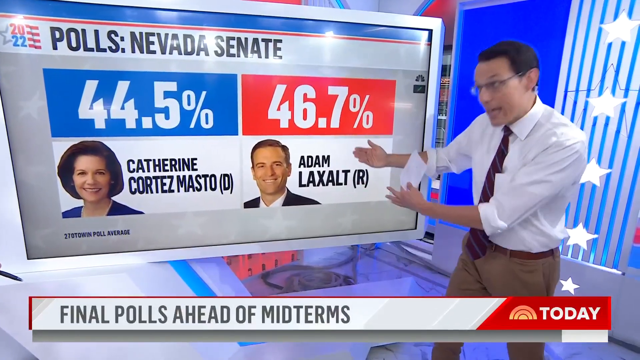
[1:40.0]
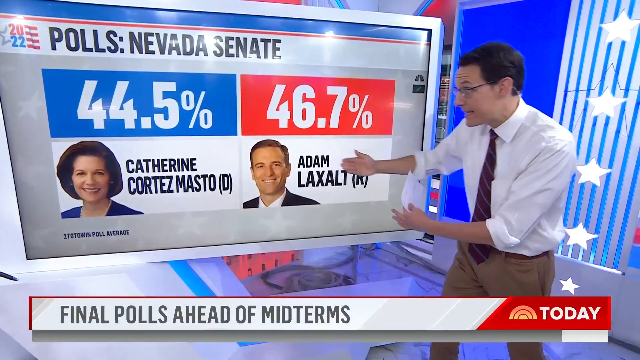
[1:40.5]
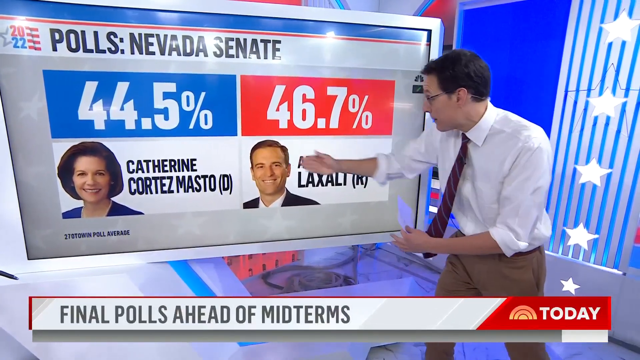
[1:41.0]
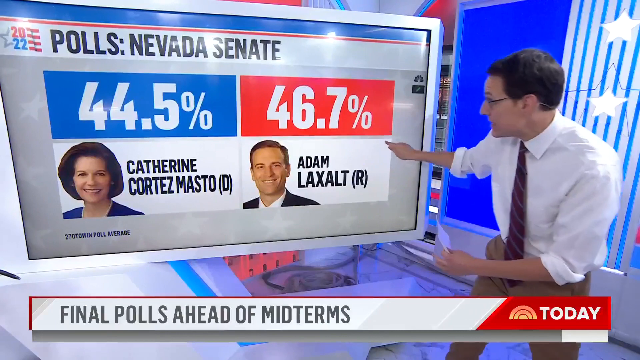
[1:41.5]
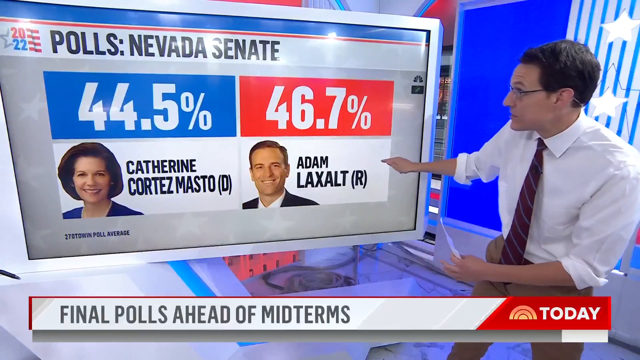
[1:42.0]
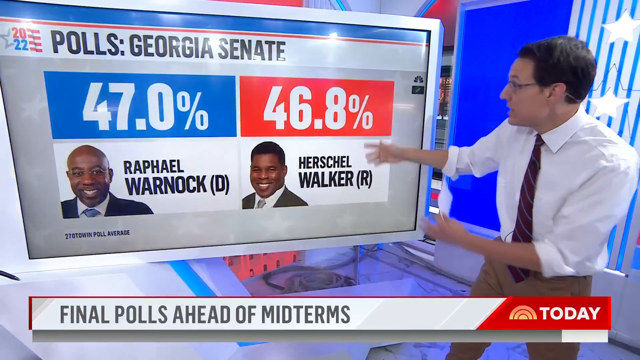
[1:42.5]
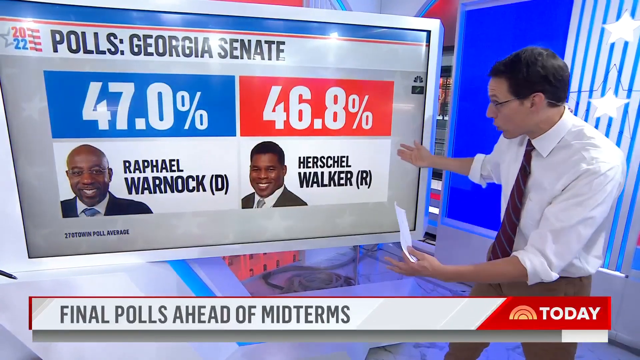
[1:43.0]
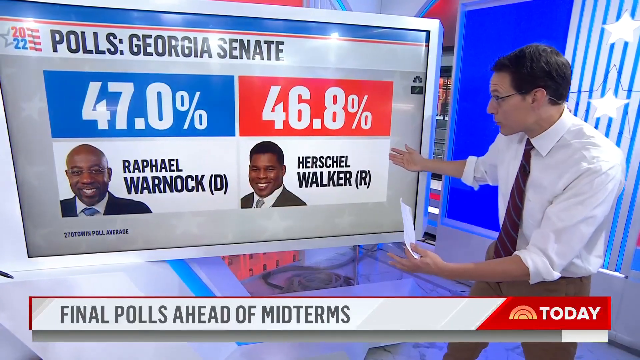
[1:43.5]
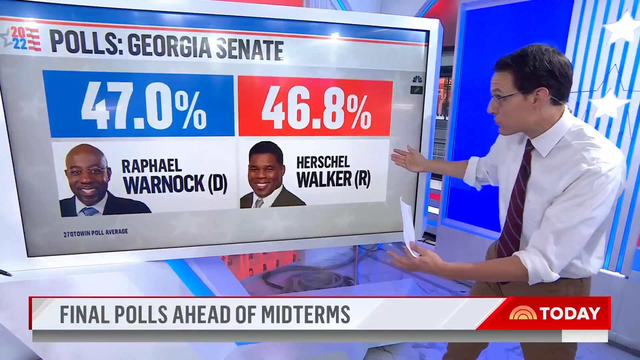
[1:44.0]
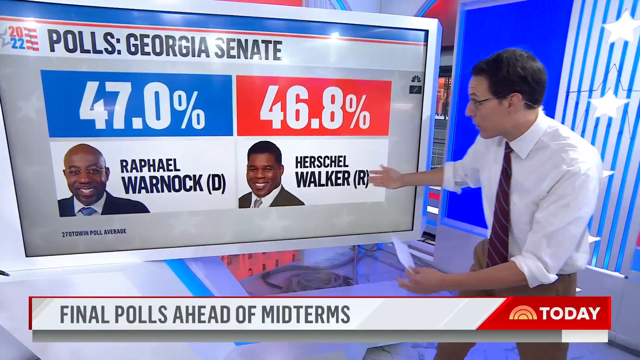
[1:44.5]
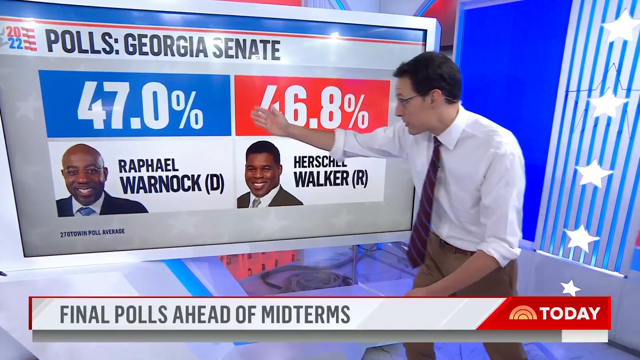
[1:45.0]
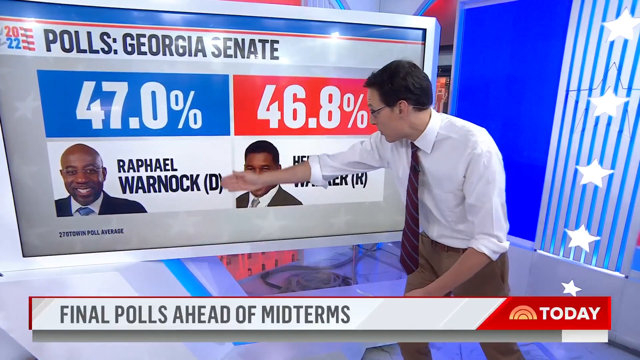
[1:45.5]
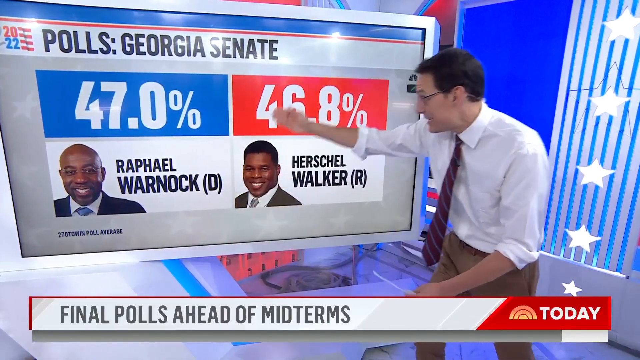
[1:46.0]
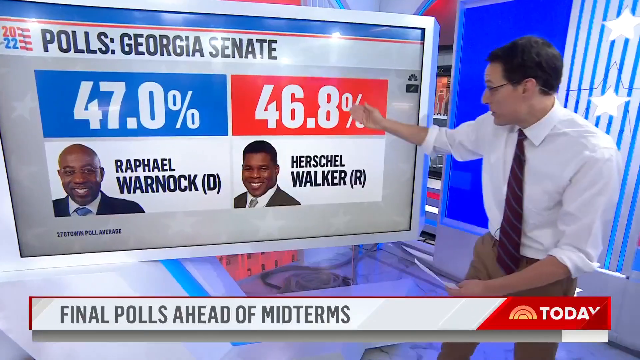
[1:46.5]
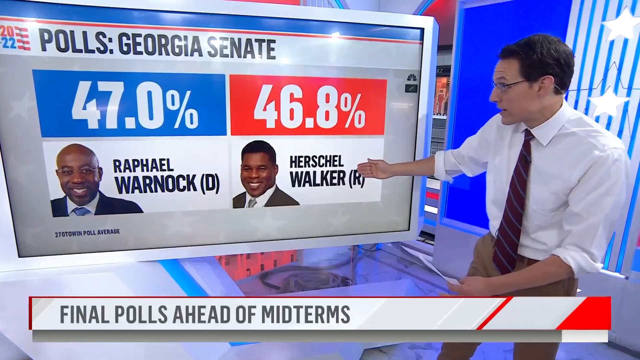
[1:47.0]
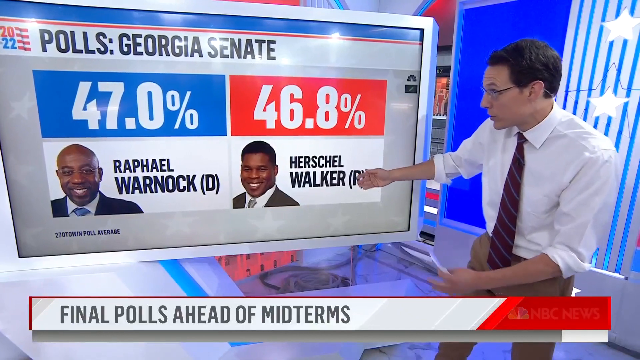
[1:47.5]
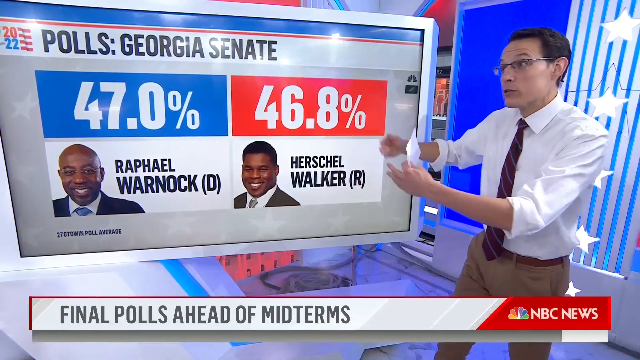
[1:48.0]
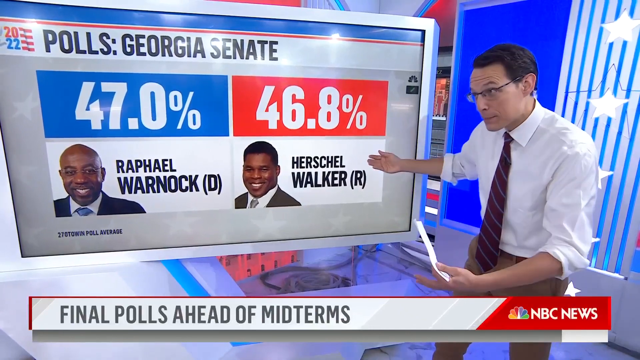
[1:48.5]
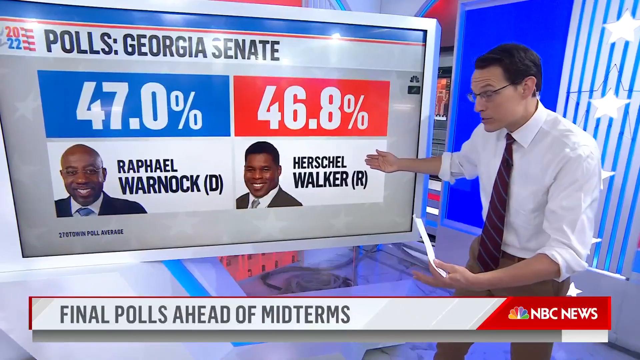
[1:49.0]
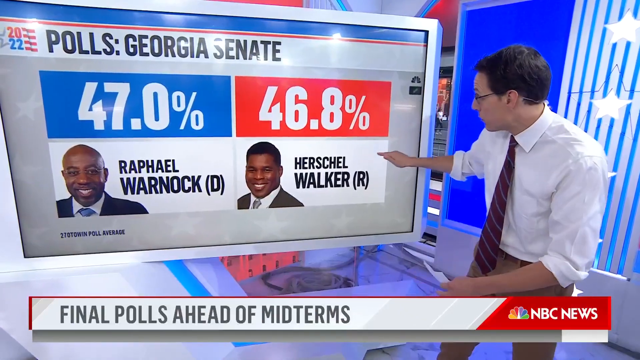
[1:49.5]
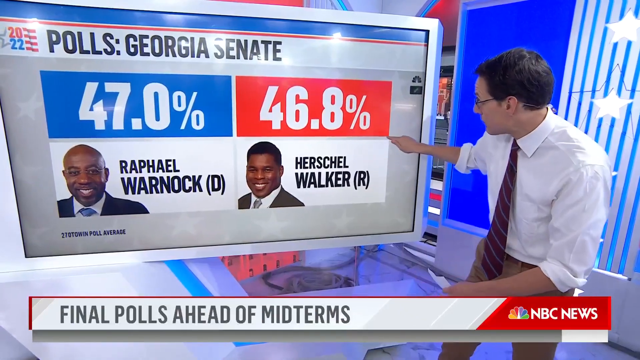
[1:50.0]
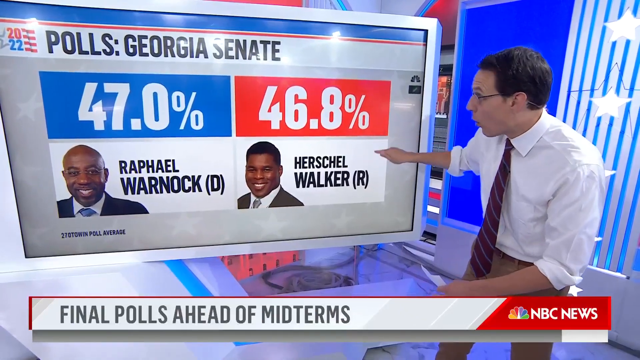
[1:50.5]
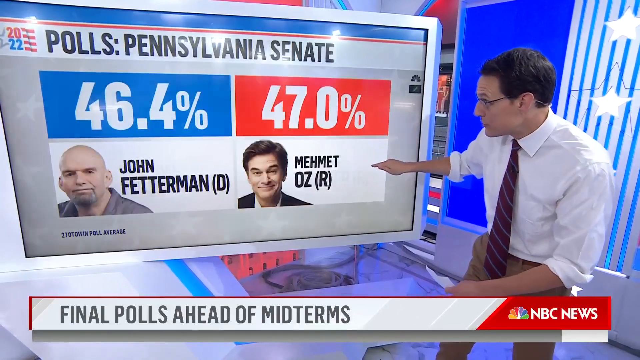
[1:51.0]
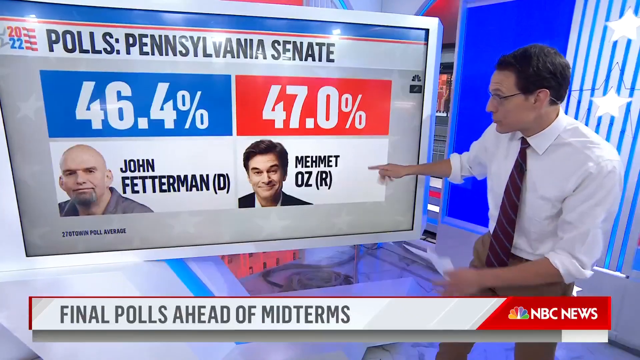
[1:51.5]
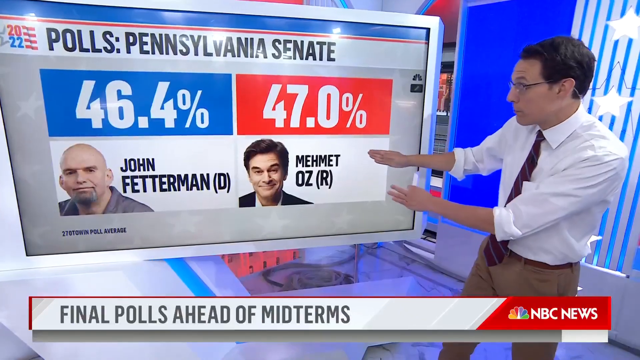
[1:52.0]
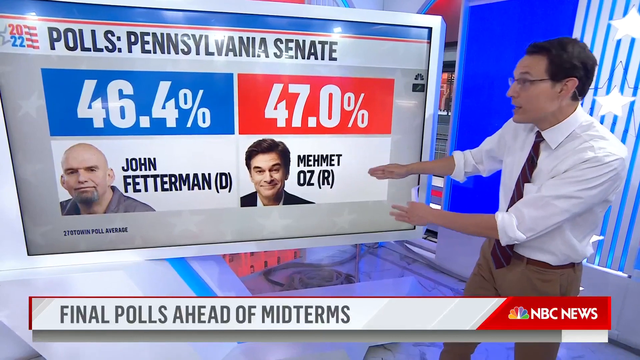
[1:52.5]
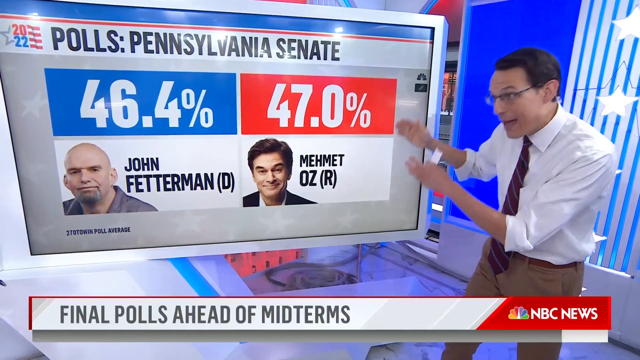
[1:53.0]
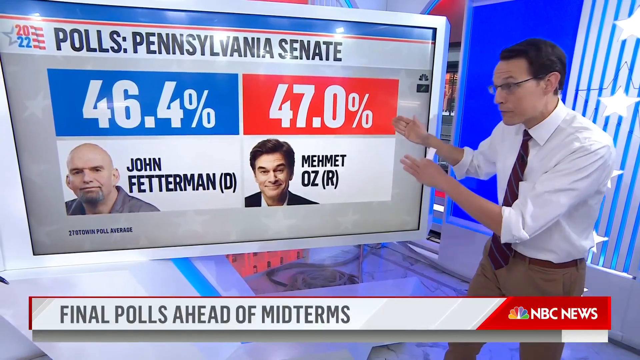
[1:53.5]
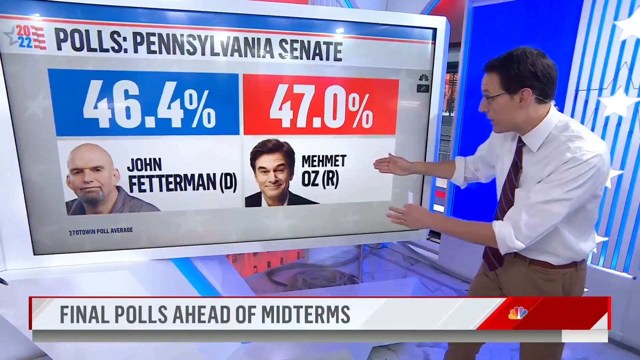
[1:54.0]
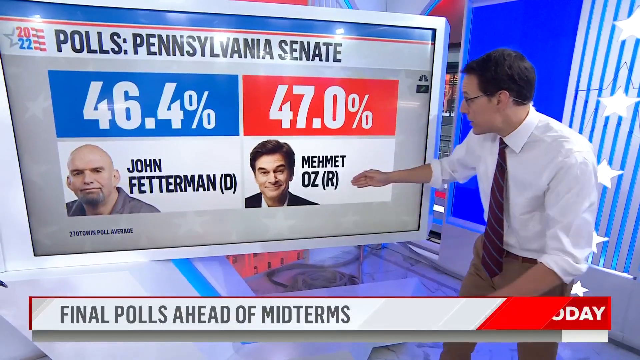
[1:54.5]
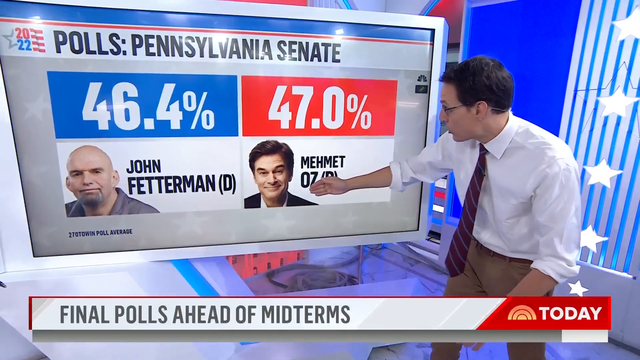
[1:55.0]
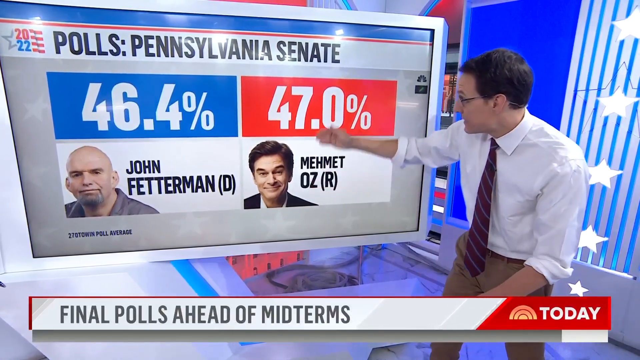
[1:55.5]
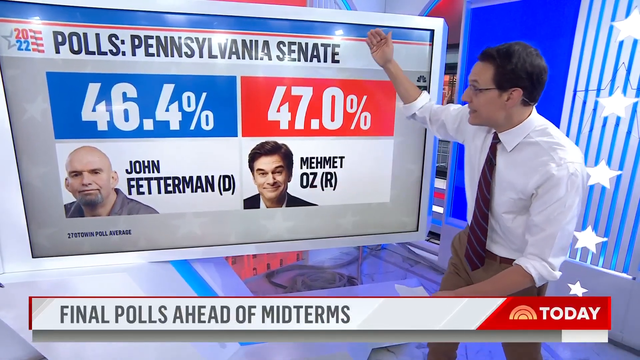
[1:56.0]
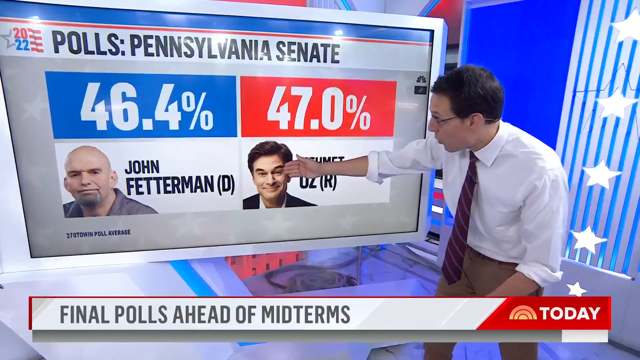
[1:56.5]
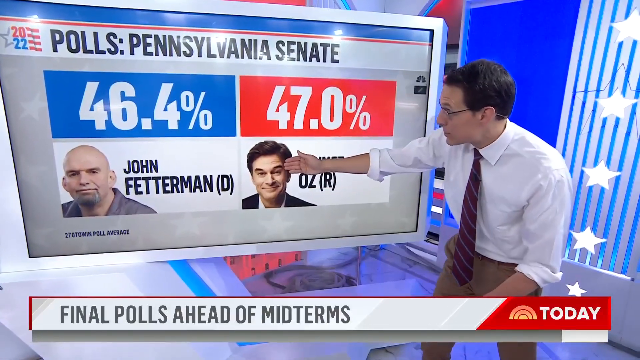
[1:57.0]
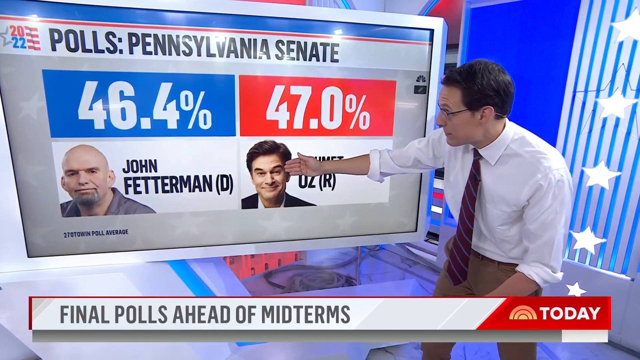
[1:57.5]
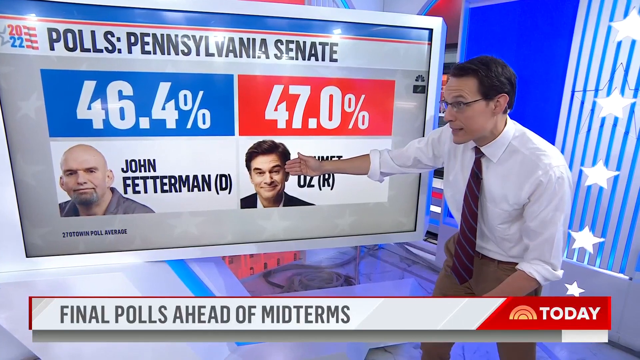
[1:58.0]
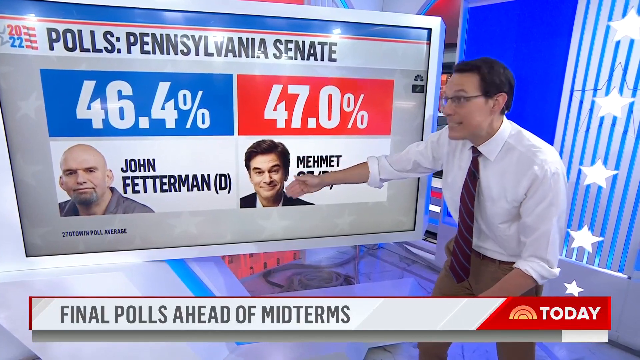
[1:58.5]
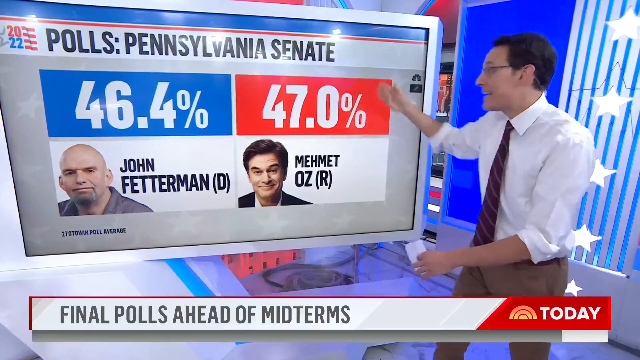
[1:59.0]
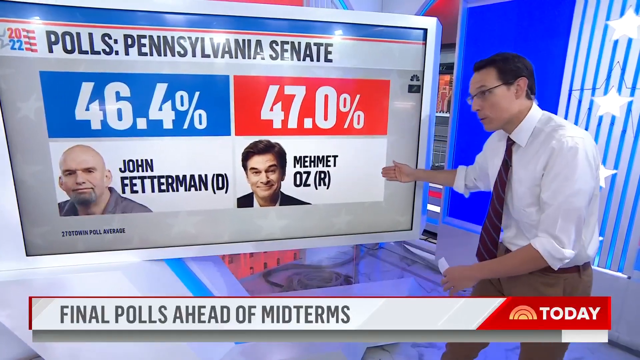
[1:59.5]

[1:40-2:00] The Nevada Senate polls are still shown, then the Georgia Senate polls appear, showing 47% for Ralph, a Democrat, and 46.8% for Hershel Walker, a Republican. The man is in front of the screen gesturing toward it. Next comes the Pennsylvania Senate, with 46.4% for John Feather man, a Democrat, and 47% for the Republican candidate. The man gestures toward the screen again, pointing toward different people. The studio is well lit and the video is clear. The man seems very excited as he goes through the polls.